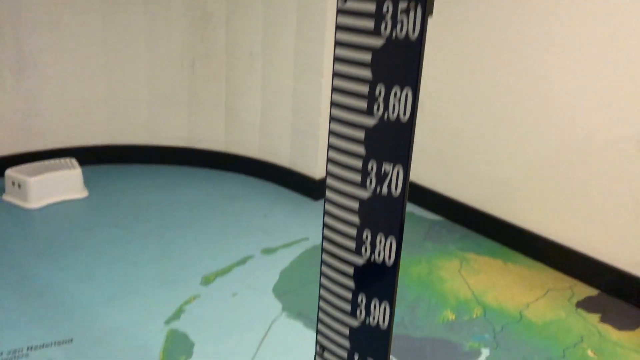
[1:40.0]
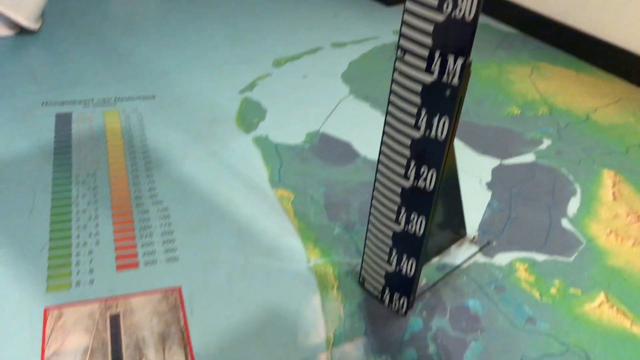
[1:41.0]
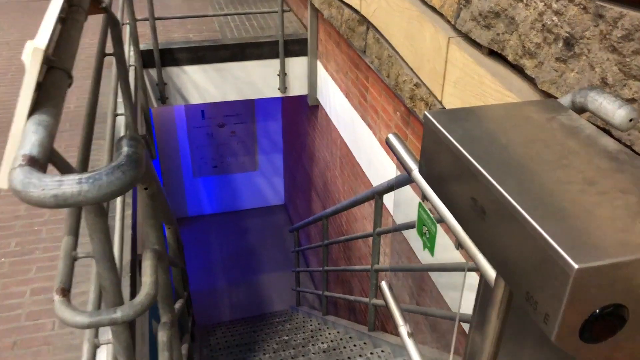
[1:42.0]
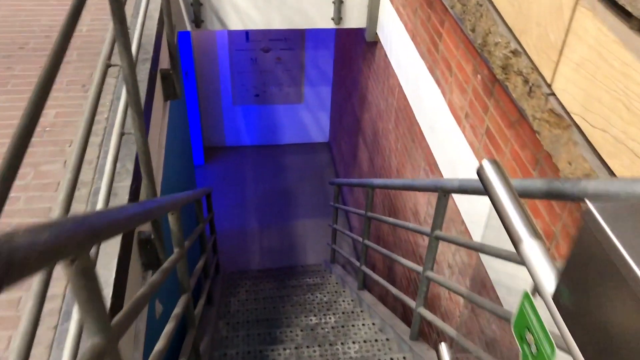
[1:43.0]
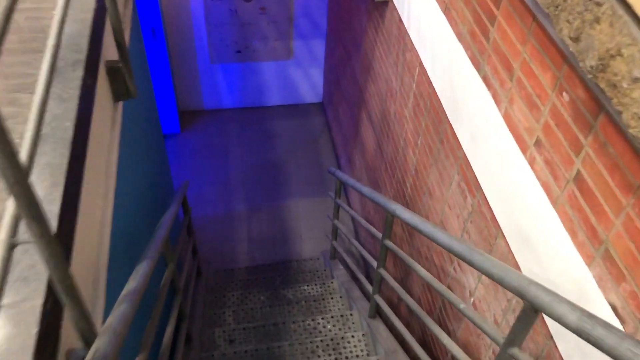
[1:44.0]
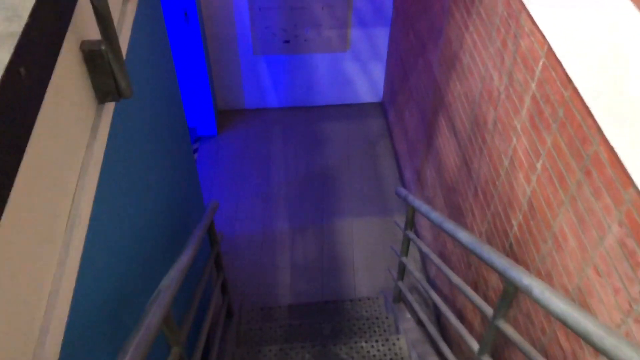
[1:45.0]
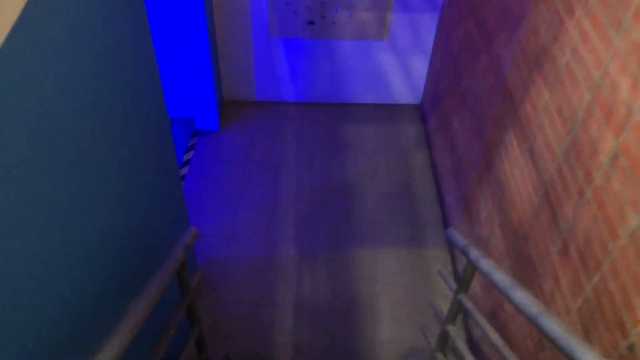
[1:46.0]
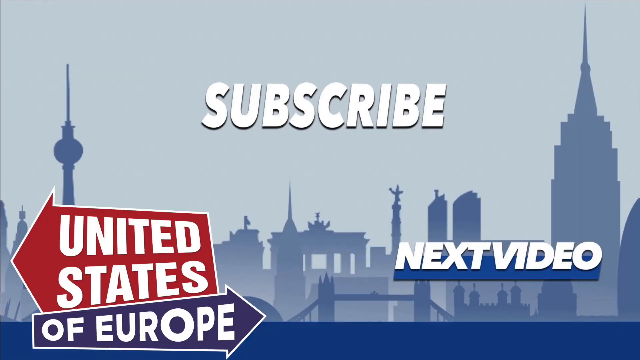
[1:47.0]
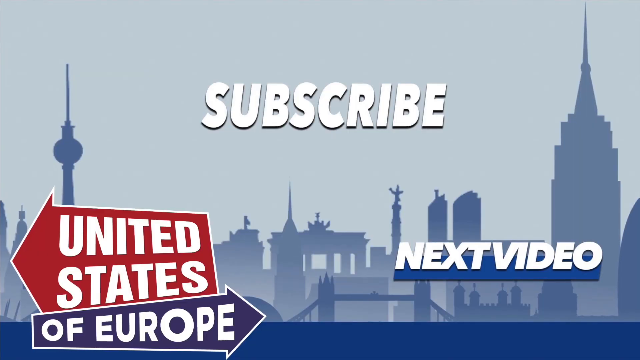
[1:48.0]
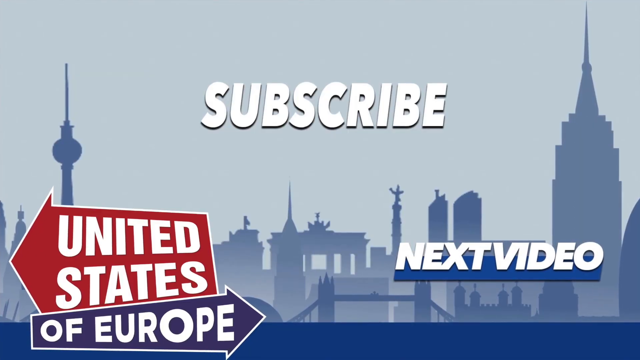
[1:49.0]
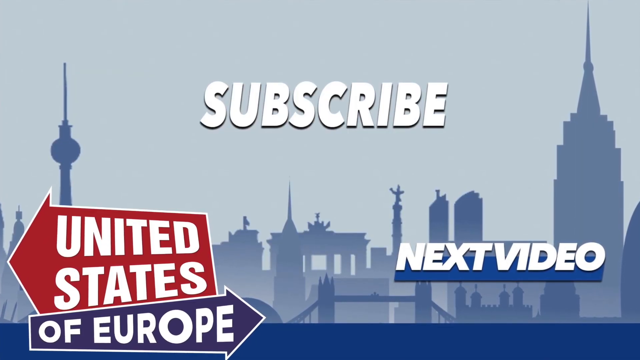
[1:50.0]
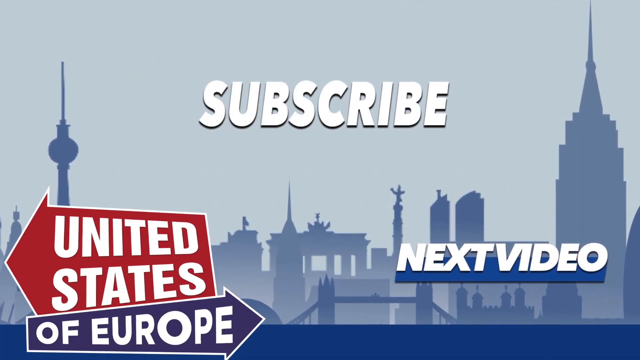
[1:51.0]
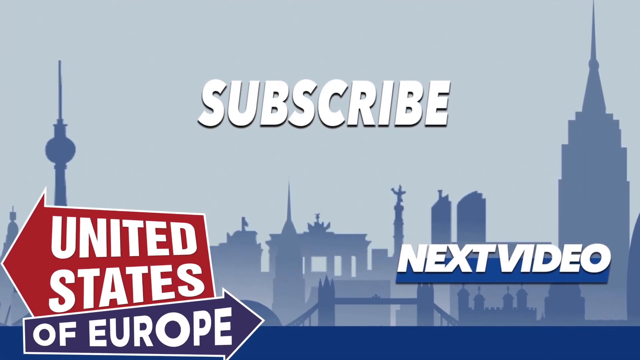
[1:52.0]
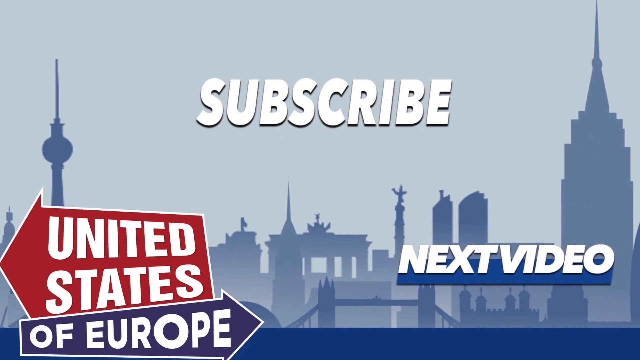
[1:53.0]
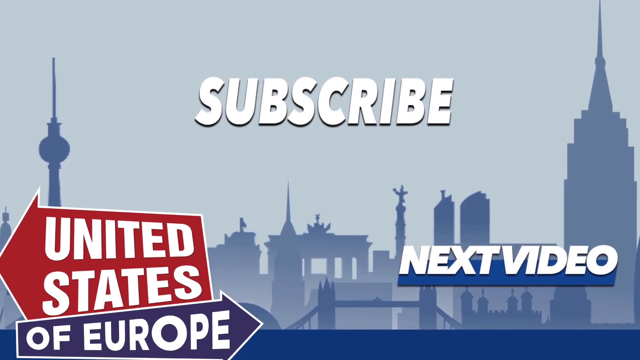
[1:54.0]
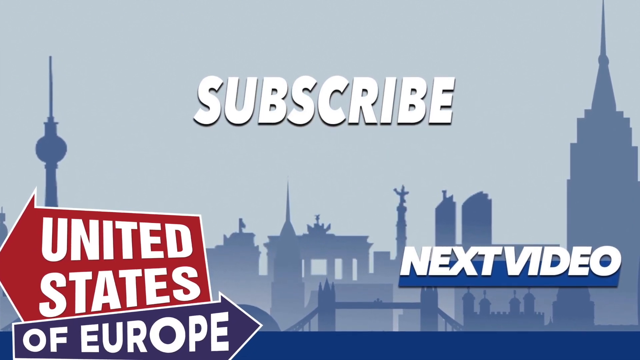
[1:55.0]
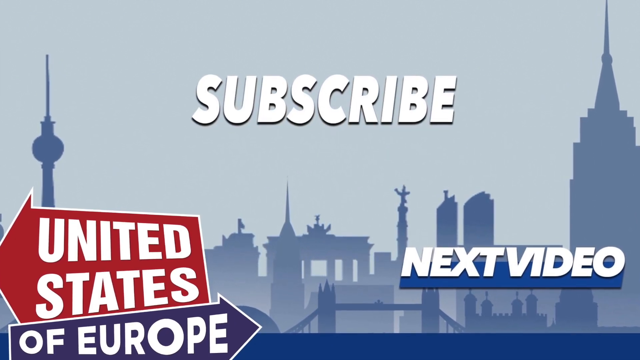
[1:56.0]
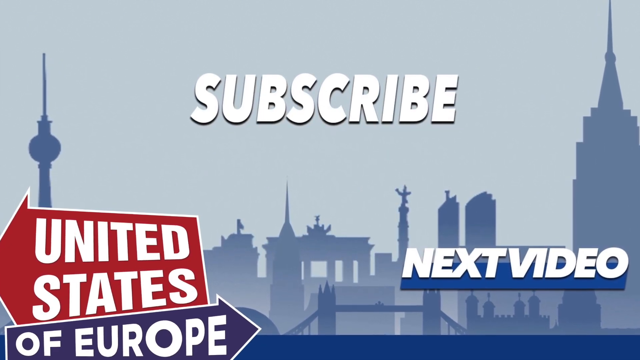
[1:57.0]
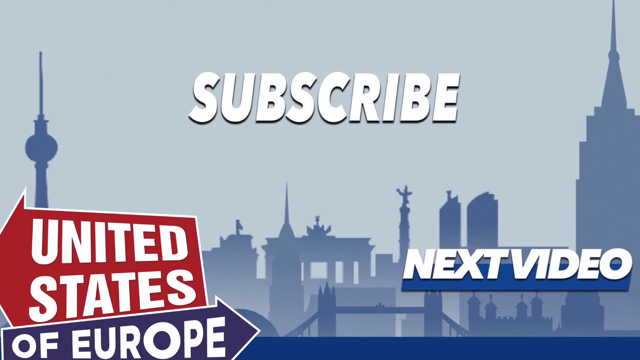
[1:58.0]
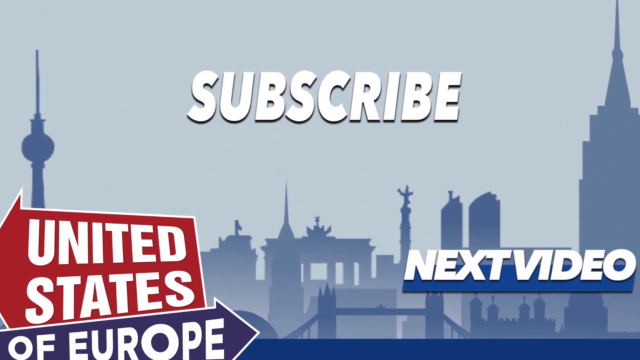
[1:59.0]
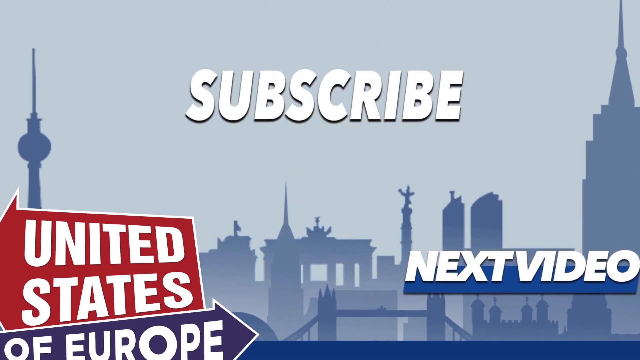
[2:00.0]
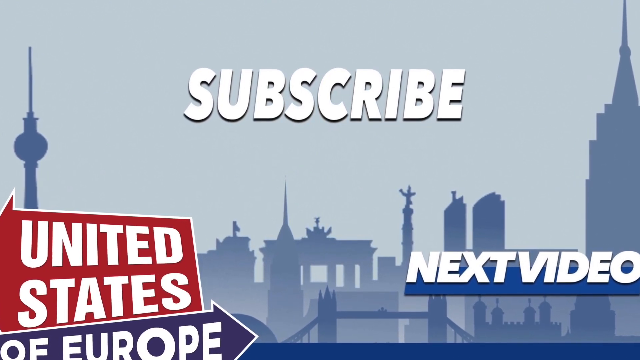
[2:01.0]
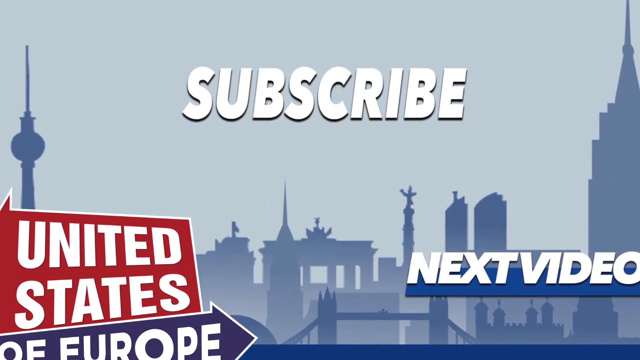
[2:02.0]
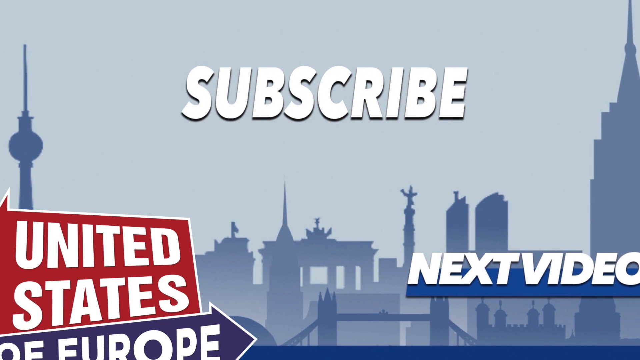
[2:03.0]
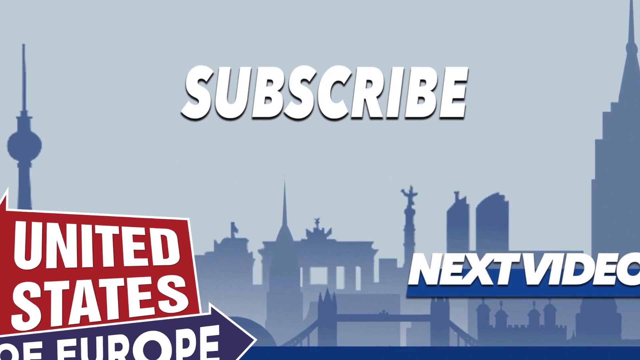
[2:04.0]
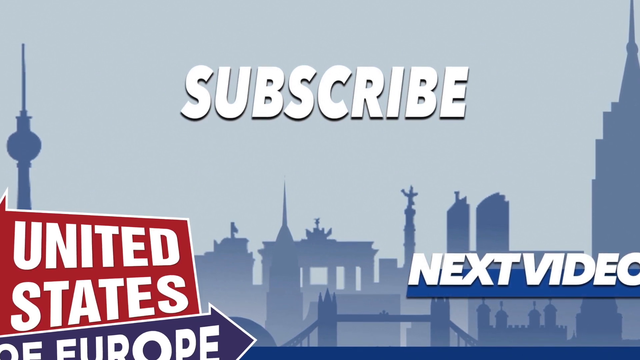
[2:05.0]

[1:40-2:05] The ruler starts at three metres, with white stools in the background, and the view pans down it. The scene changes to a set of steps going underground, this time with what appears to be a blue light at the bottom. The camera walks down the stairs, which have metal handrails on either side, towards the blue light. On the left is another set of stairs with yellow and black hazard tape on the edges. A subscribe screen follows, reading "United States of Europe", "subscribe" and "next video", with silhouettes of various buildings in the background, including the Brandenburg Gate, the Empire State Building and the Tower of London. It appears to be an invitation to subscribe to a channel.